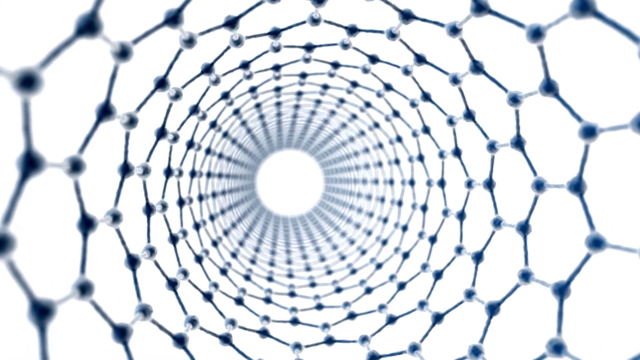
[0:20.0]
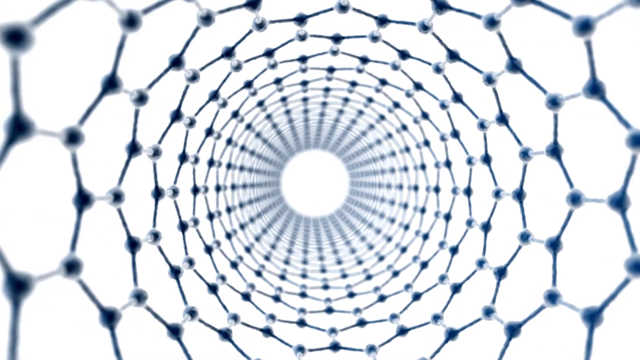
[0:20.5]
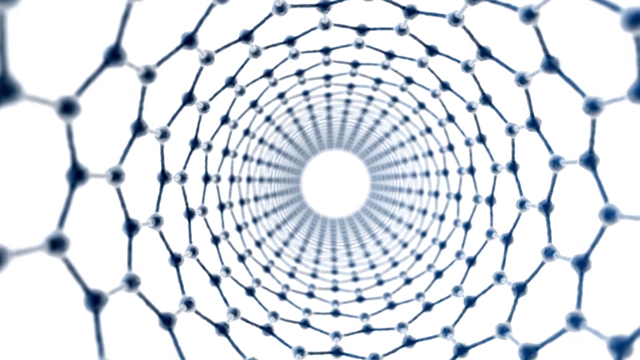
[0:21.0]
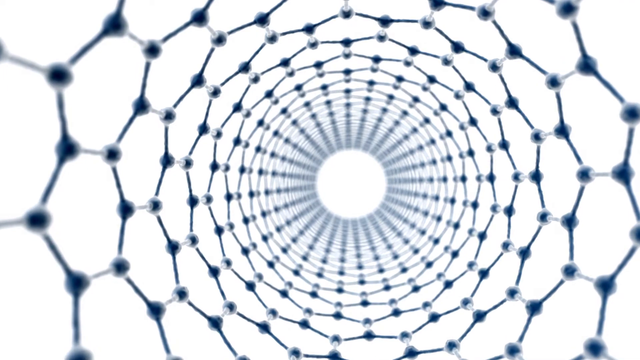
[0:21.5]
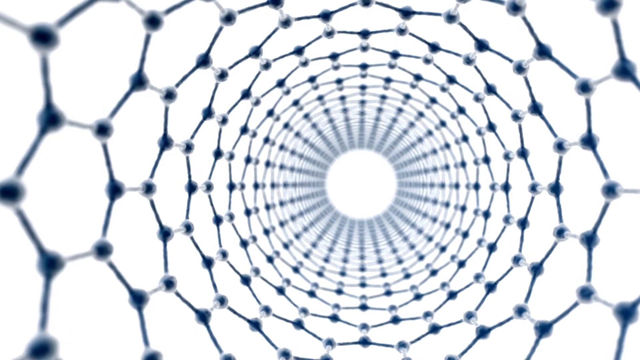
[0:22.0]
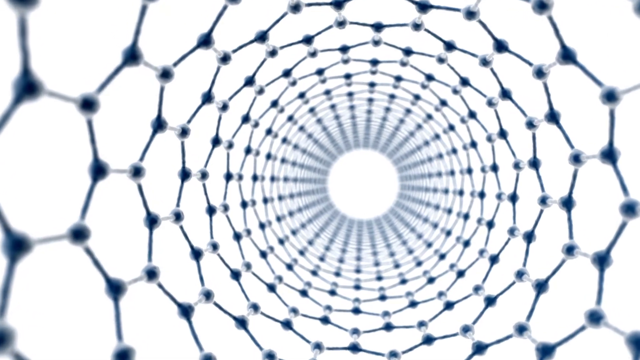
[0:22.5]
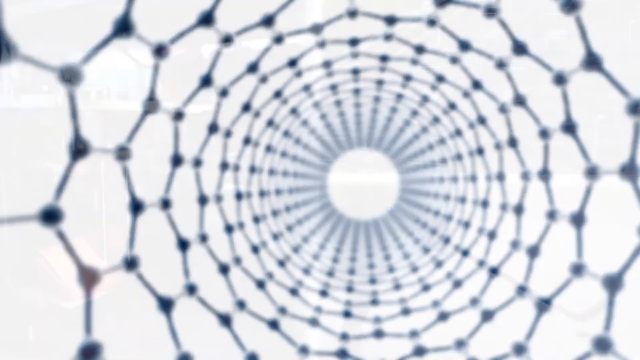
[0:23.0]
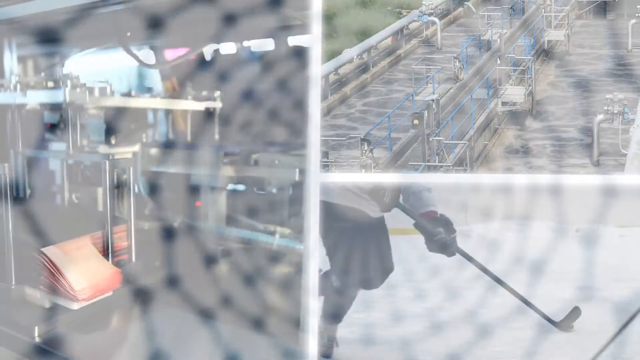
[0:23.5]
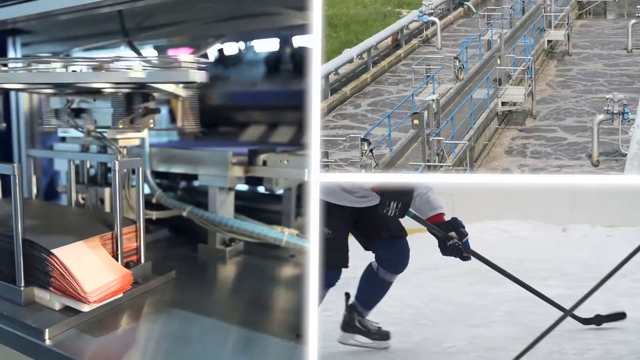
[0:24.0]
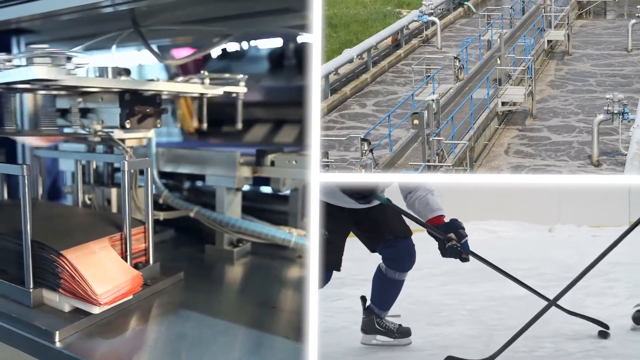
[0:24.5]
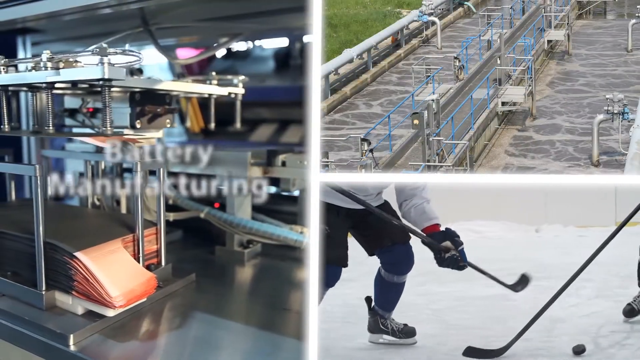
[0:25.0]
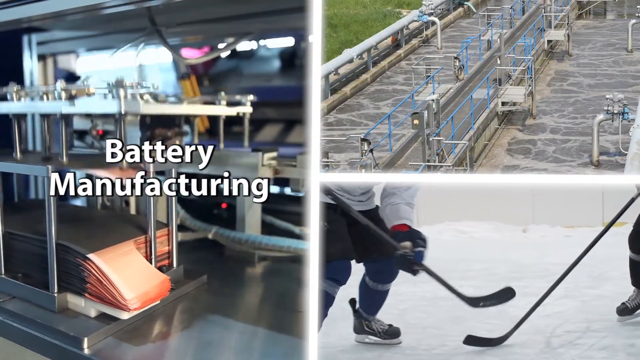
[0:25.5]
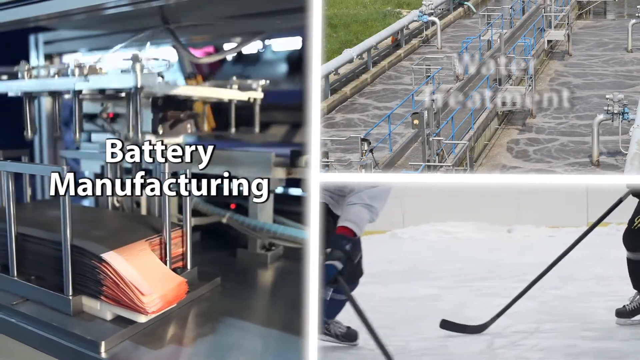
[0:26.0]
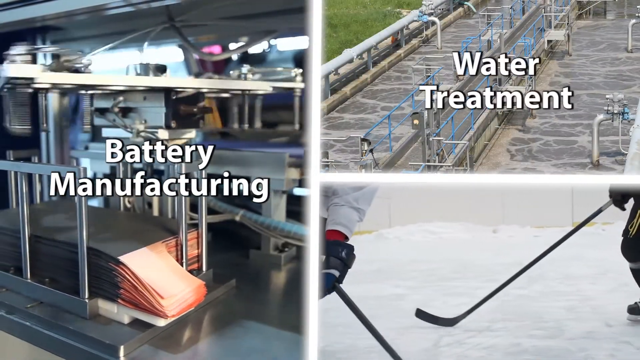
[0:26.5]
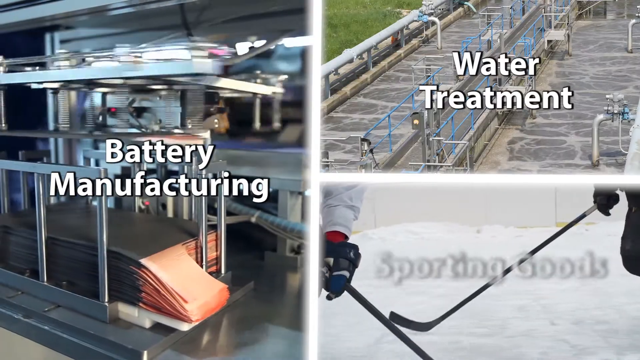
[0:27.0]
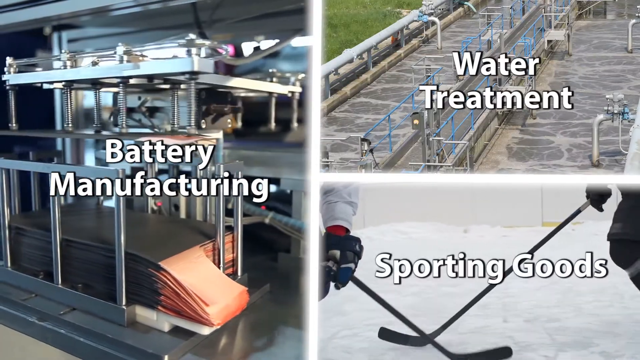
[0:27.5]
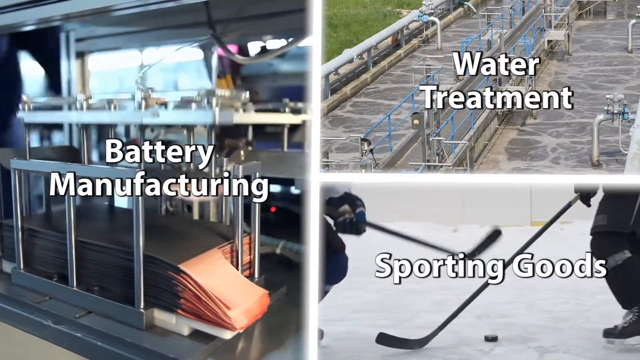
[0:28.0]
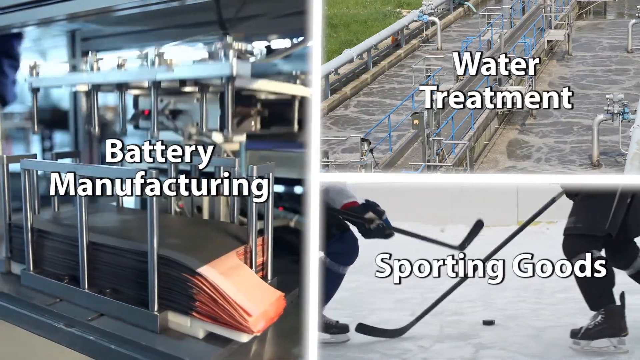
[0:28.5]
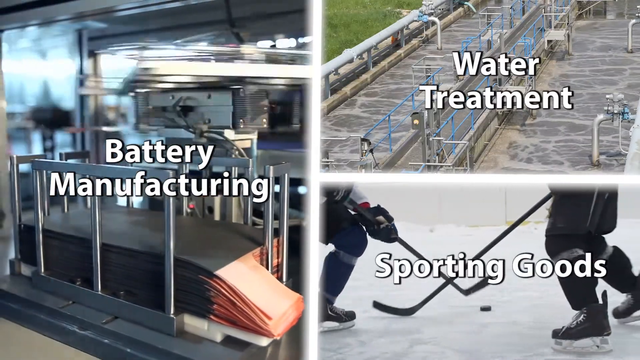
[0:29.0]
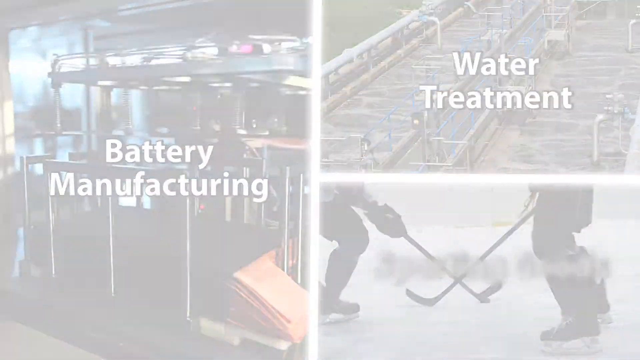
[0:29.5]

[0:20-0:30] The view continues through the tunnel made of molecules. The far end of the tunnel is a white, bright circle, and the background around it is white as well. Then a three-way split screen appears. The left screen shows science-related machinery, the bottom right shows a hockey player moving, and the top right shows what looks like water running through the top of a building, with a walkway in the center. Each screen has a title: the left says "battery manufacturing", the top right "water treatment", and the bottom right "sporting goods".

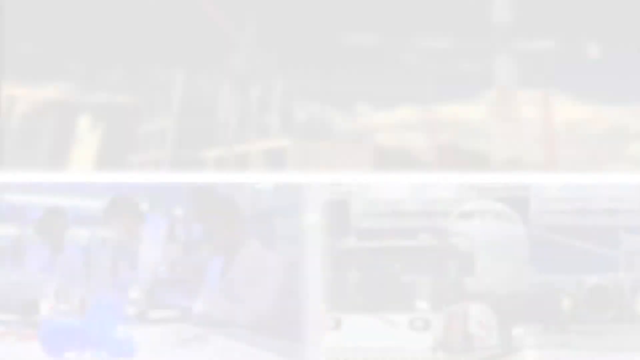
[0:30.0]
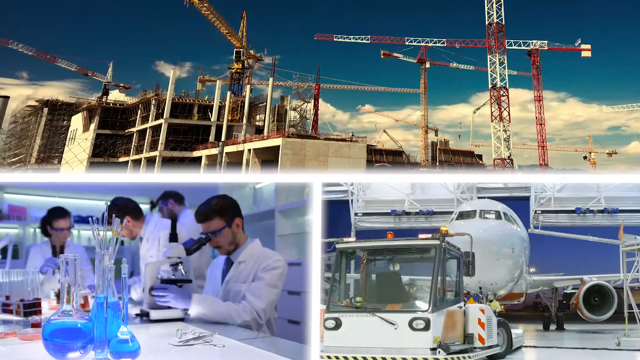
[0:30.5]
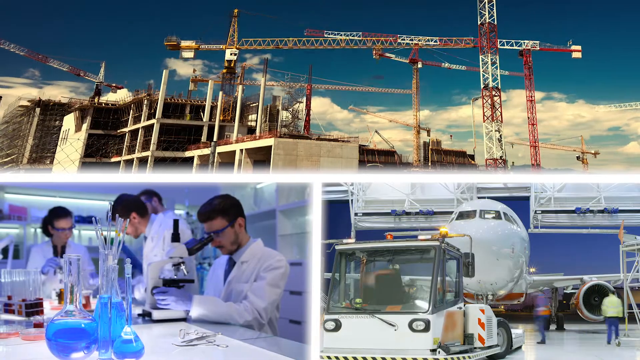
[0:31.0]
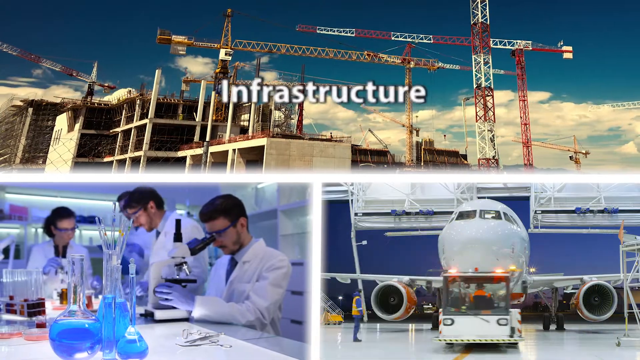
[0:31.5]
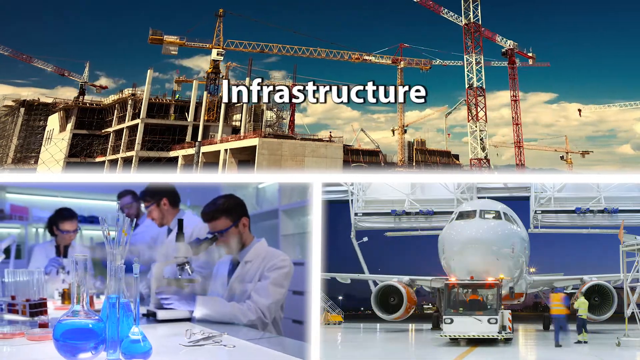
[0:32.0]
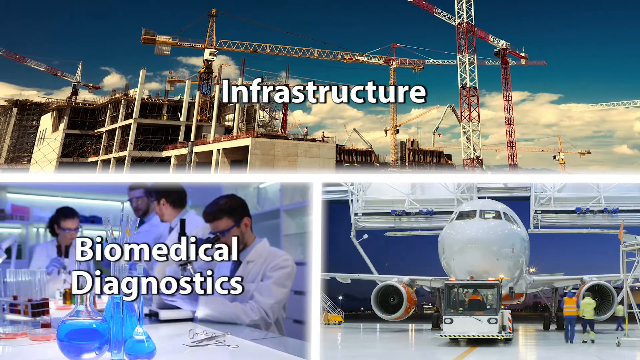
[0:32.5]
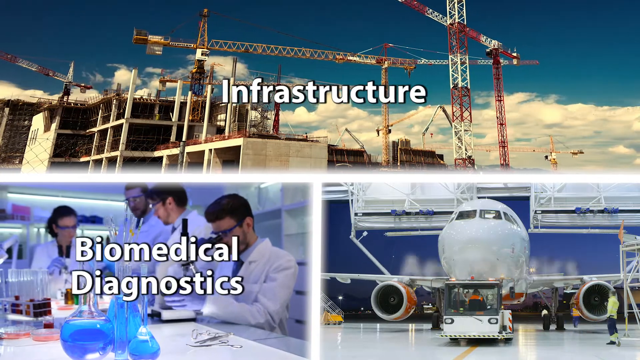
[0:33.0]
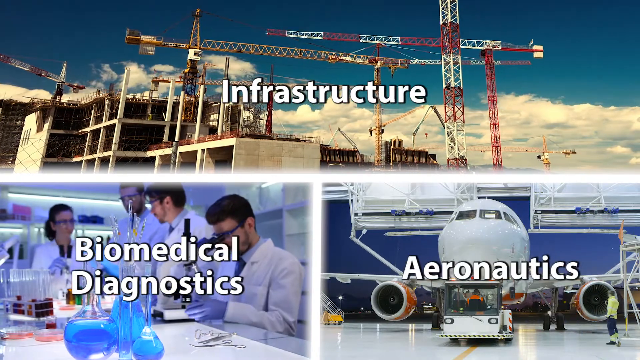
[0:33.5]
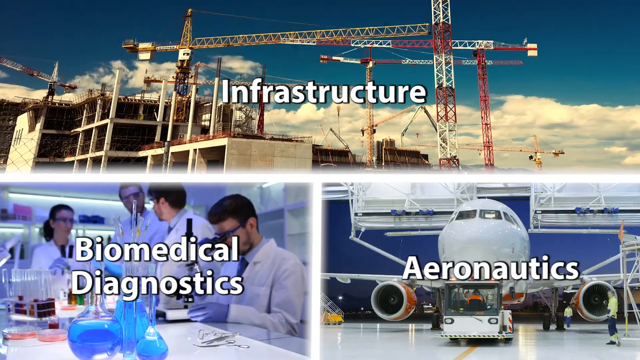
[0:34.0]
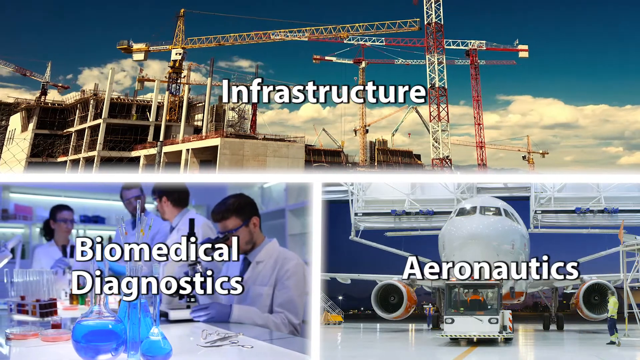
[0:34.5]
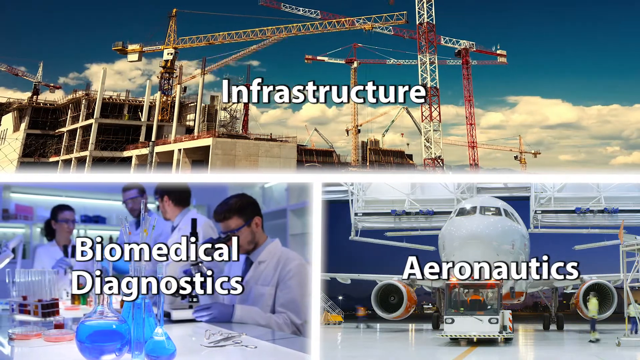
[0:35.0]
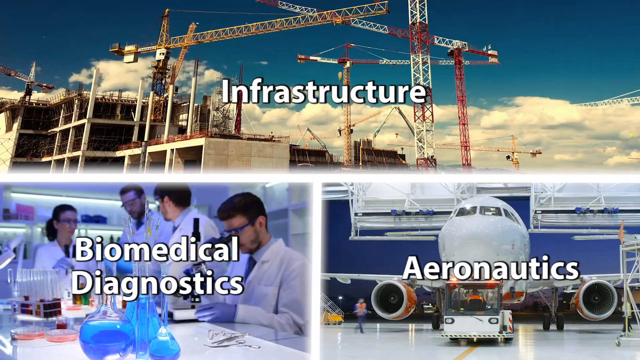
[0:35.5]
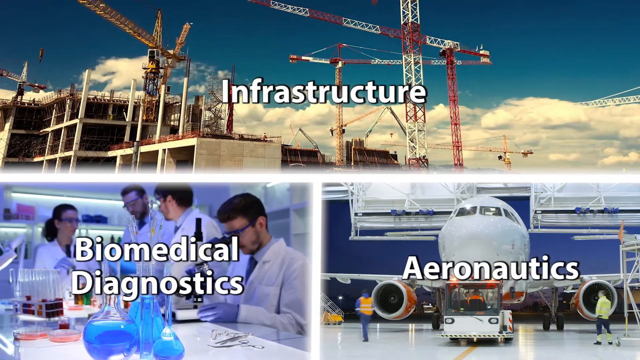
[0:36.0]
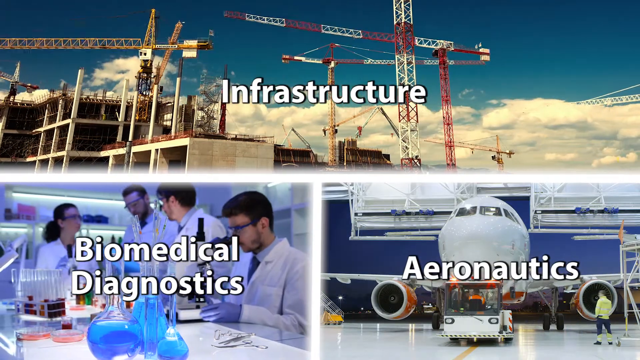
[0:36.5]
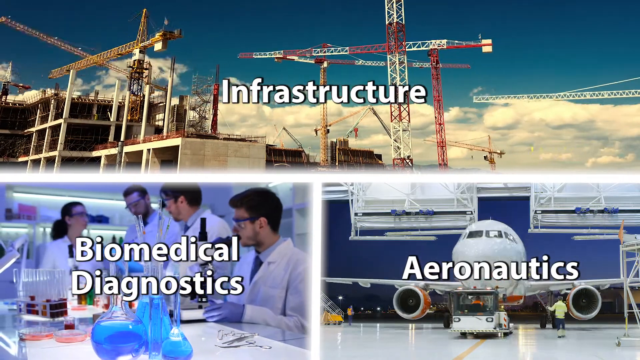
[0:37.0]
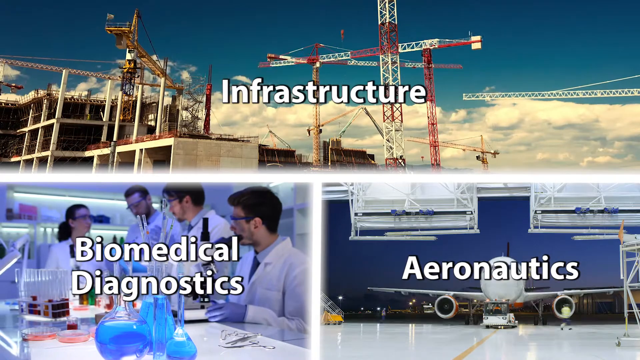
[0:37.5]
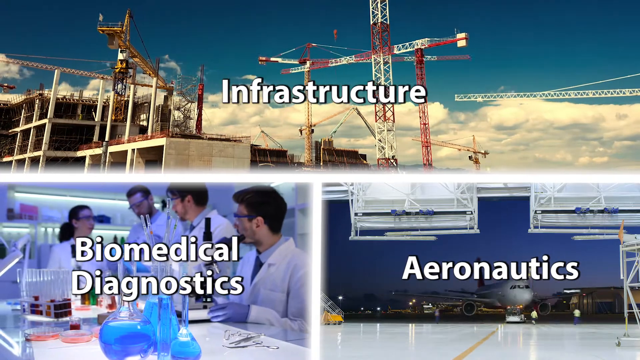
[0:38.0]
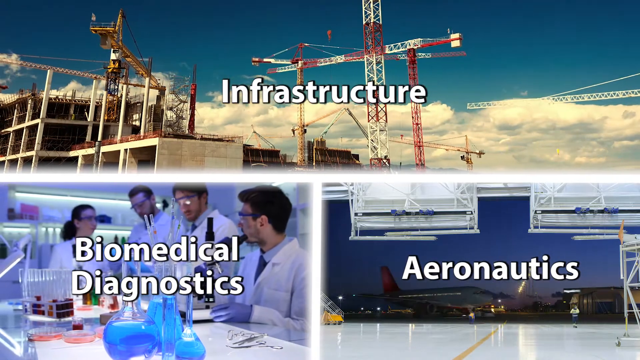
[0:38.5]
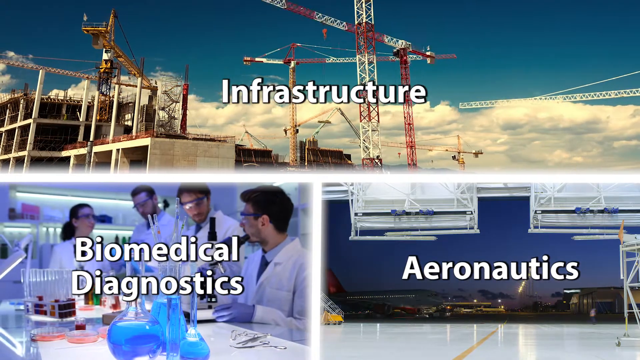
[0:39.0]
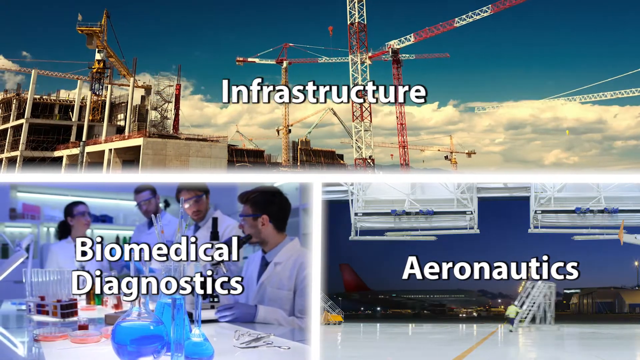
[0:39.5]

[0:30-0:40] Another three-way split screen appears, with the top screen spanning side to side and smaller screens at the bottom left and right. The top screen shows a construction site. The bottom left shows three scientists in white coats around a science-related table with beakers filled with blue liquid, and one scientist looking through a microscope. The bottom right shows the front of an airplane, and then a person driving up on a Zamboni, with two bystanders. The titles read "infrastructure" at the top, "biomedical diagnostics" at the bottom left, and "aeronautics" at the bottom right.